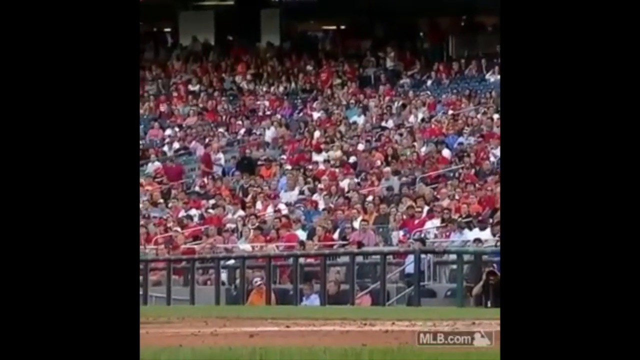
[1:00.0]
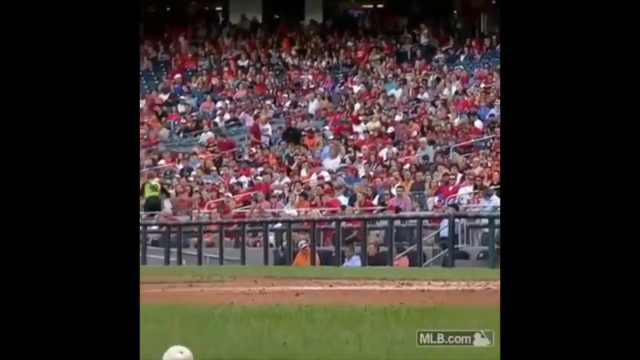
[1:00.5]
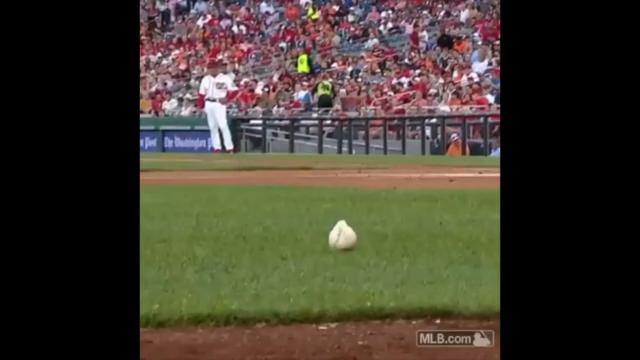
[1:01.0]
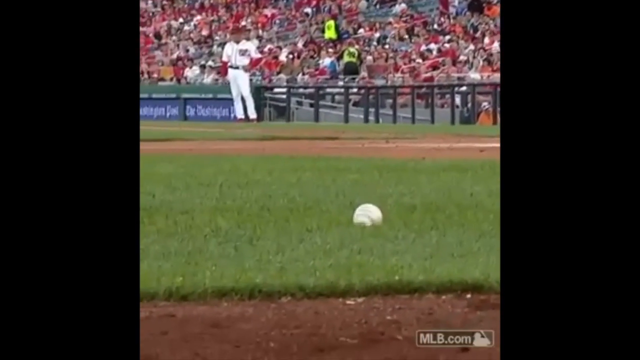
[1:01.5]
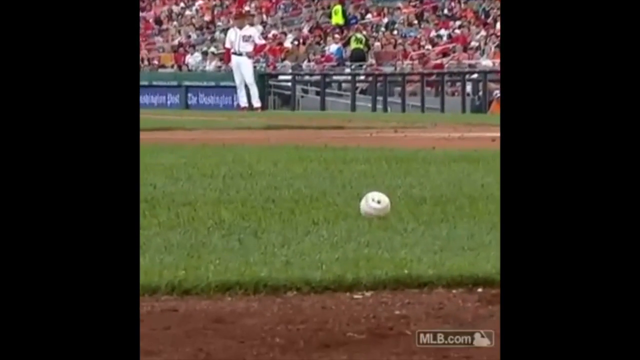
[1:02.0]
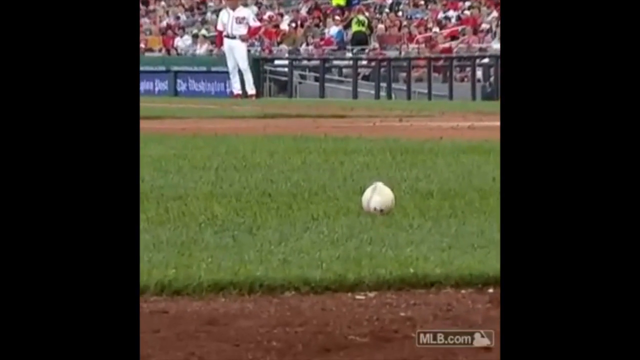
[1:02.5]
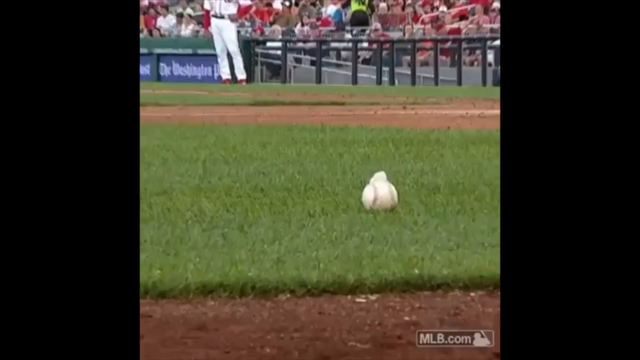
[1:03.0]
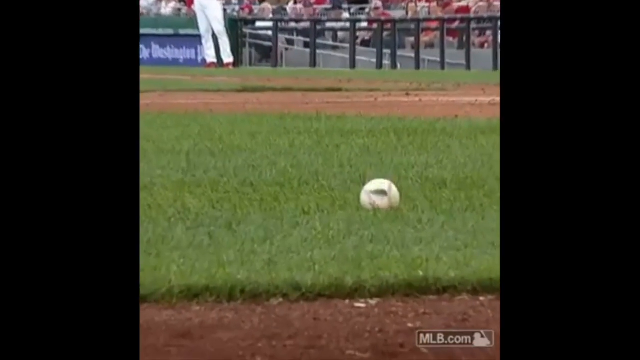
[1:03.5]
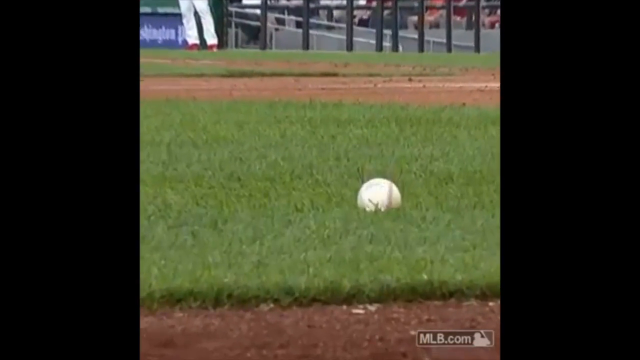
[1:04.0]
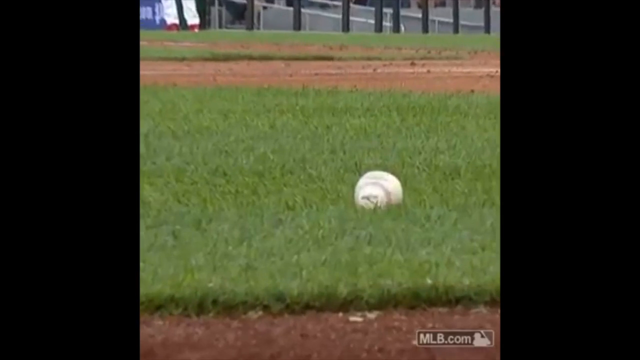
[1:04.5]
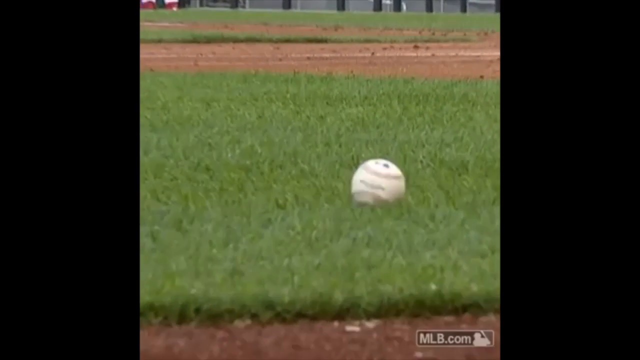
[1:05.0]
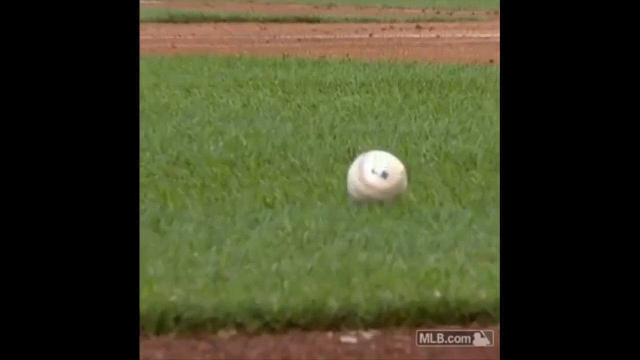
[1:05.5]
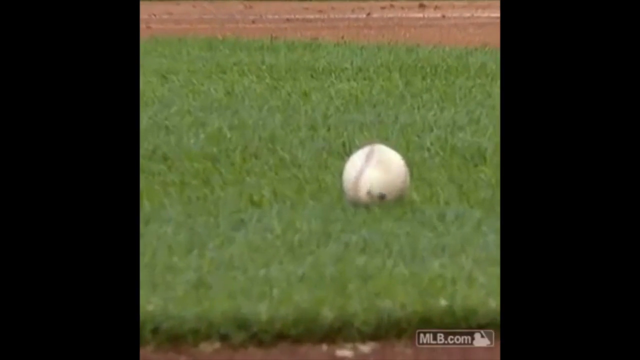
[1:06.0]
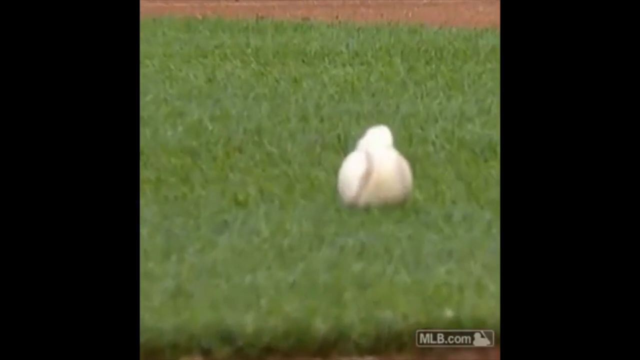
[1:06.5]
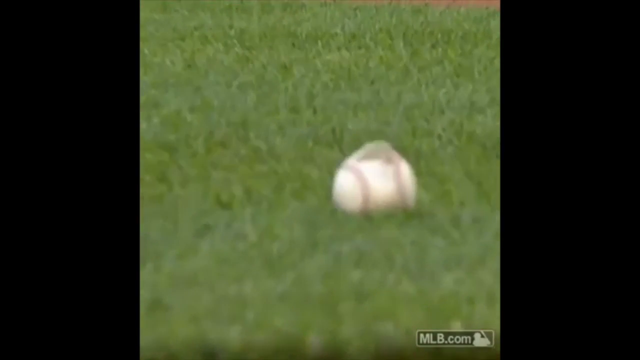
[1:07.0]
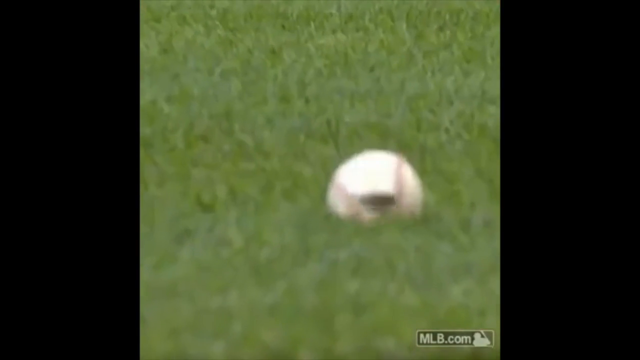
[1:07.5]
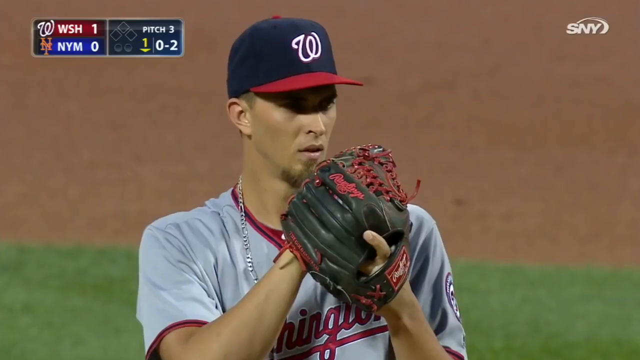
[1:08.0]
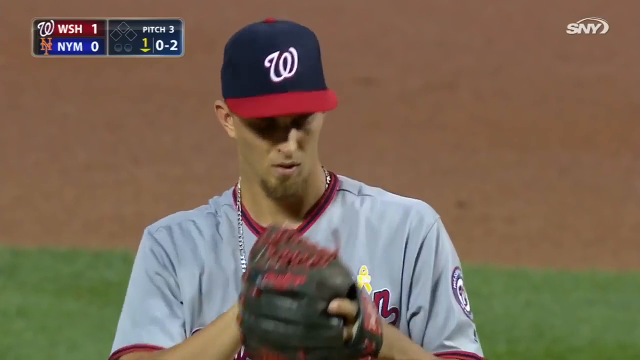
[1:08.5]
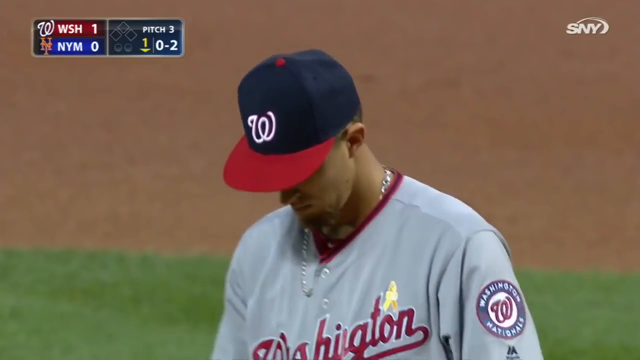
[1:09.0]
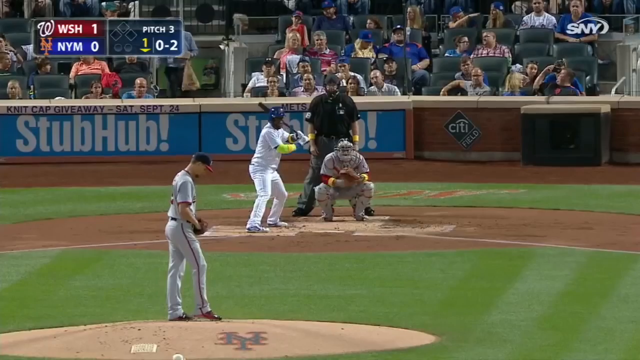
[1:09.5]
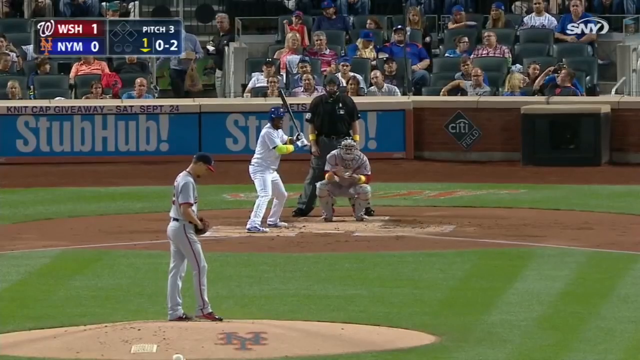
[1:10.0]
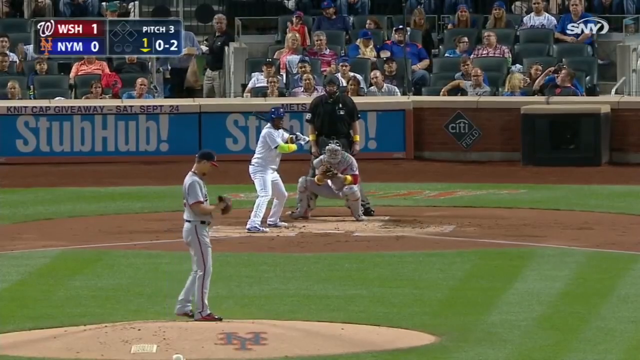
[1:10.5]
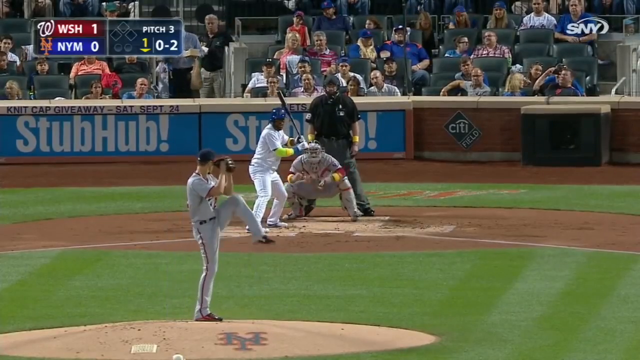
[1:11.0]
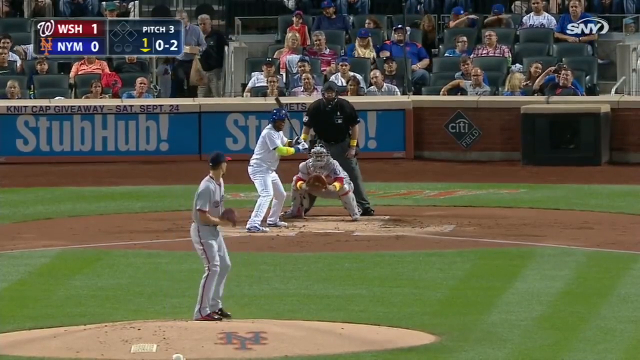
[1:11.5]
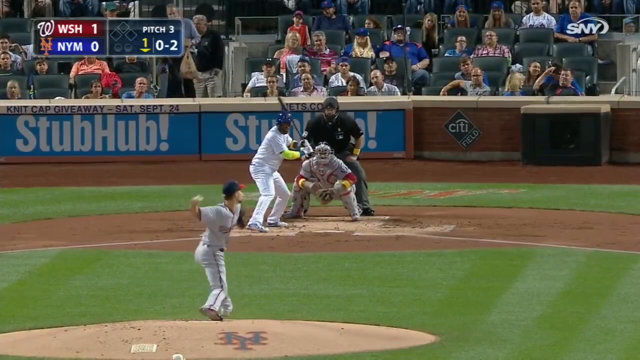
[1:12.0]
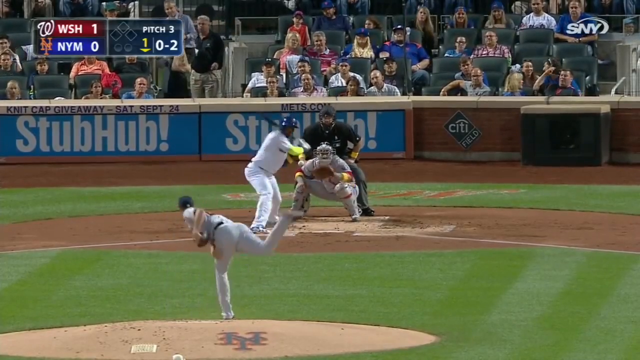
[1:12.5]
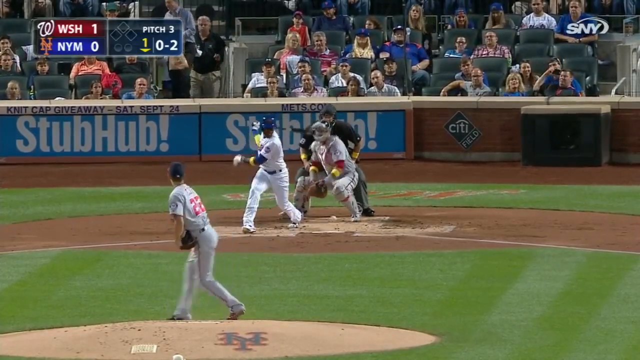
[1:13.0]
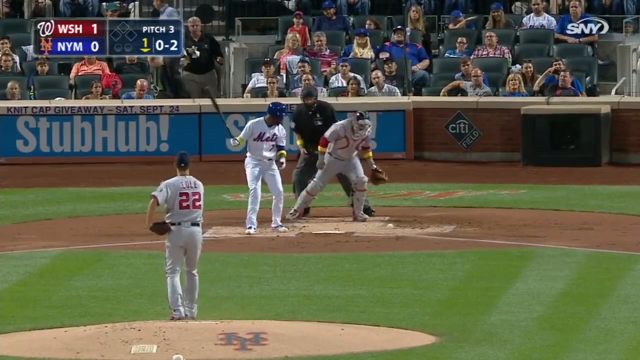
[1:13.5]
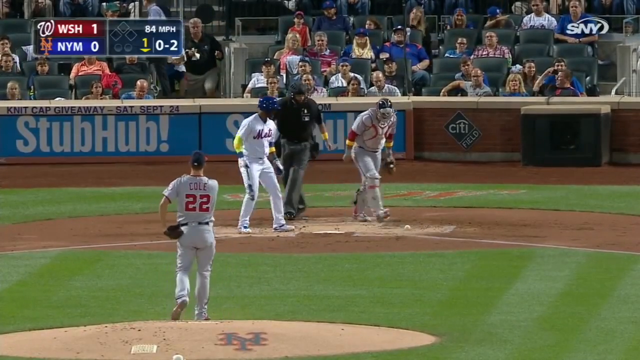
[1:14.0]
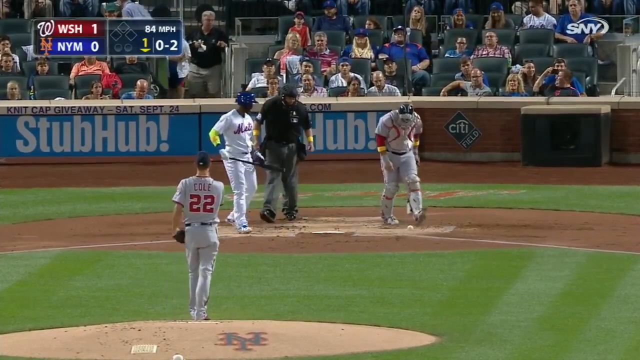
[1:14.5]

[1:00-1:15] The ripped ball is shown with a piece sticking out of it like a tongue, rolling around on the green grass in detail. Then the pitcher is ready to throw as the game continues, and a new, completely un-ripped ball is put into the game. The stadium has blue signs with white writing that say "StubHub". The umpire and the batter seem a bit stunned.